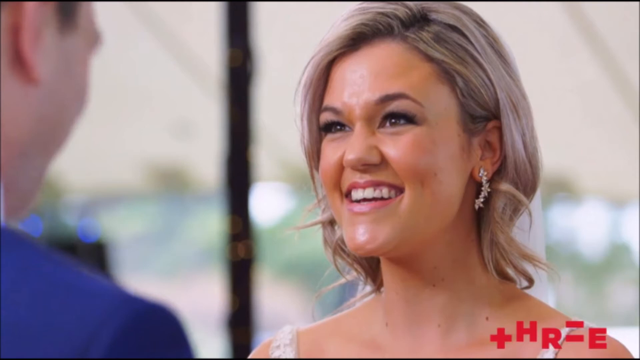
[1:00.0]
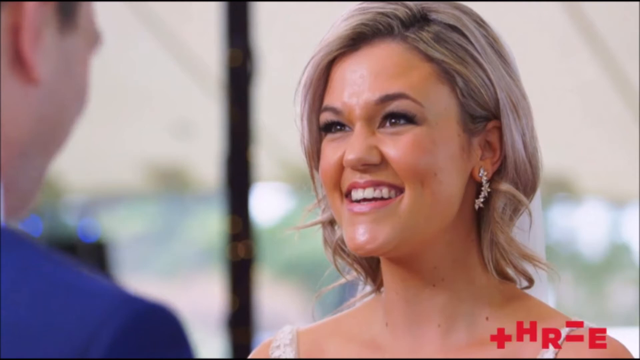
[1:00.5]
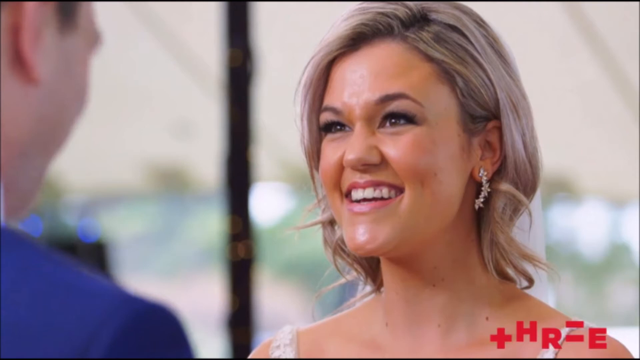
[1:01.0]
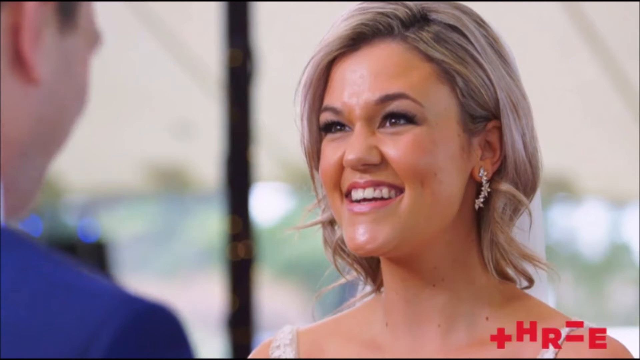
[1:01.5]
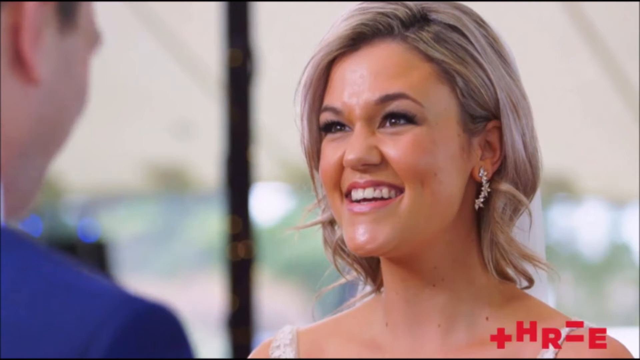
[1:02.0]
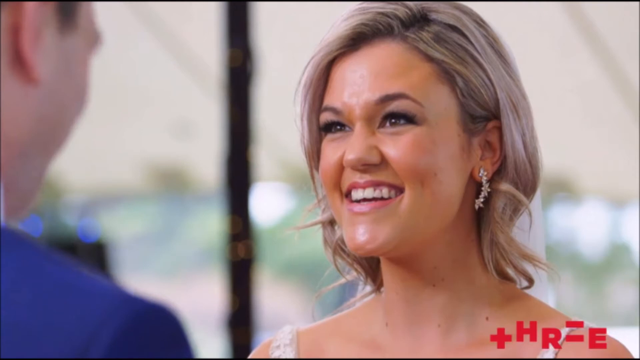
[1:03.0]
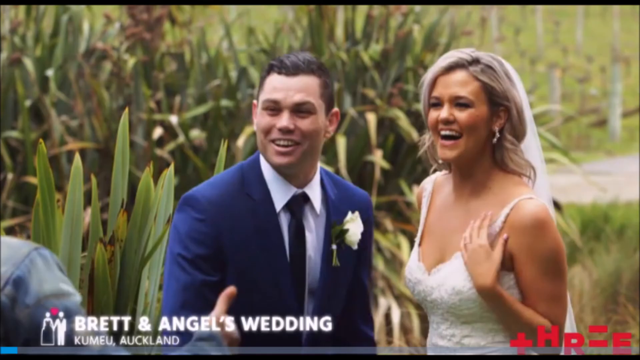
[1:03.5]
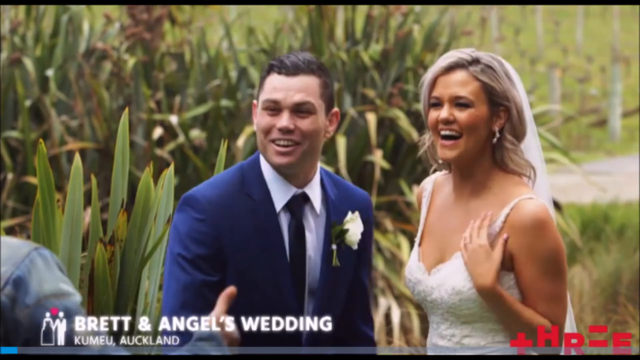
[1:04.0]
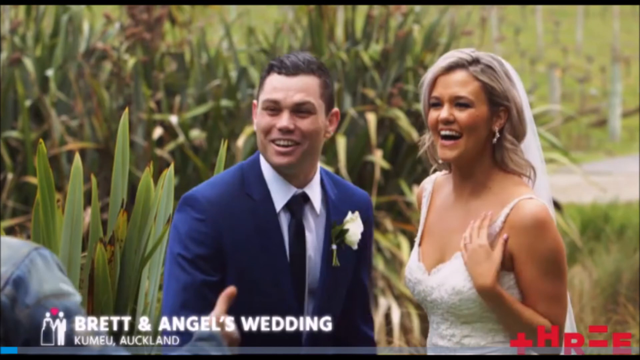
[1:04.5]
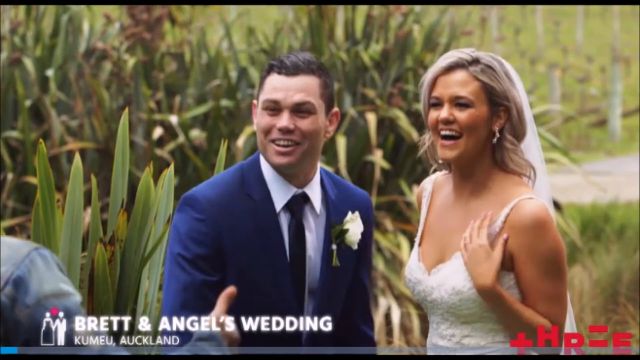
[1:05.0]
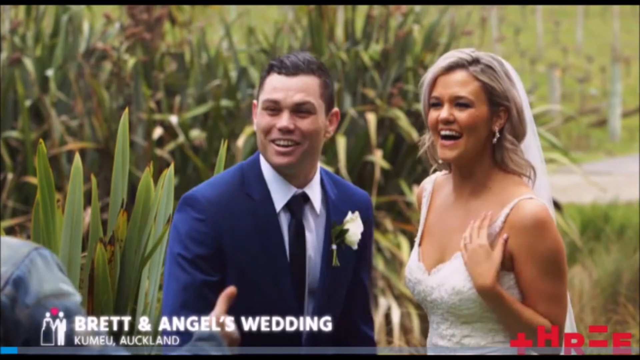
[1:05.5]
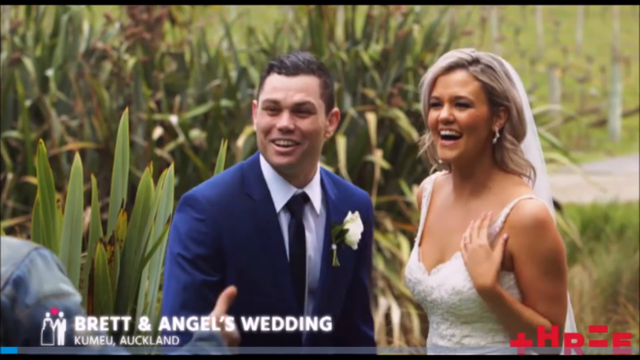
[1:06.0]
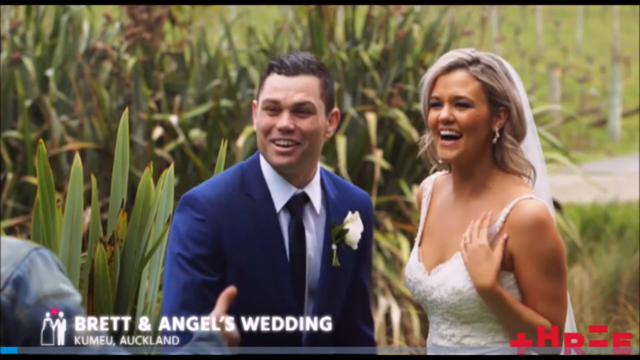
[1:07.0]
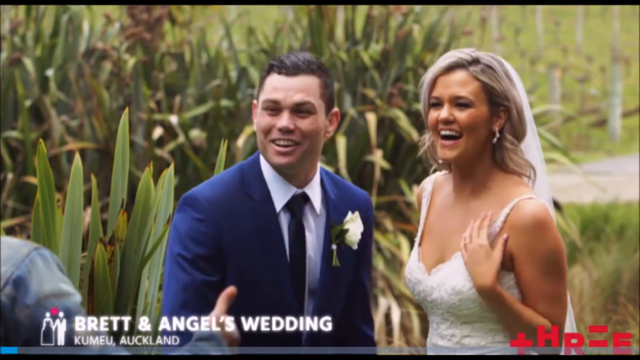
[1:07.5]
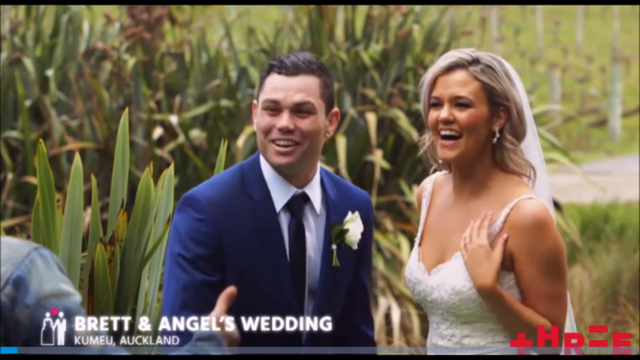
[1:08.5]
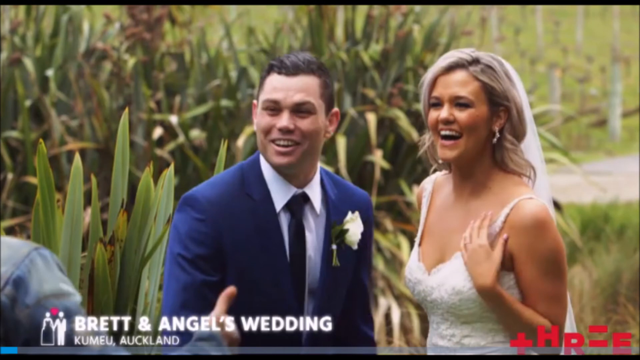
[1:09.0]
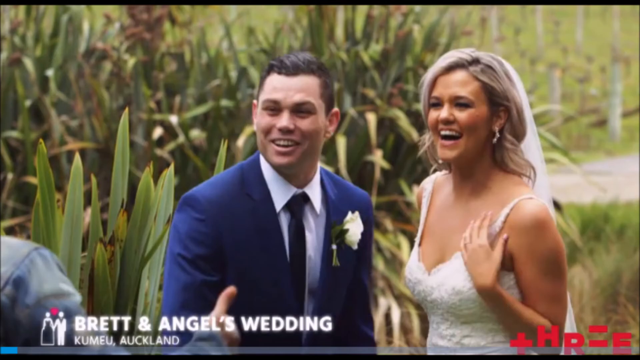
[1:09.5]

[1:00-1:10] Several pictures appear. In one, a woman smiles at a man. Glimpses of white clothing show on her, her hair is silver, and a piercing is visible in her left ear. In front of her is a man in a blue suit. Next comes a picture from Brett and Angel's wedding, with the bride on the right and the husband on the left. The groom wears a blue suit with a black tie, and Angel wears a white wedding dress. They are in a garden, with plants behind them.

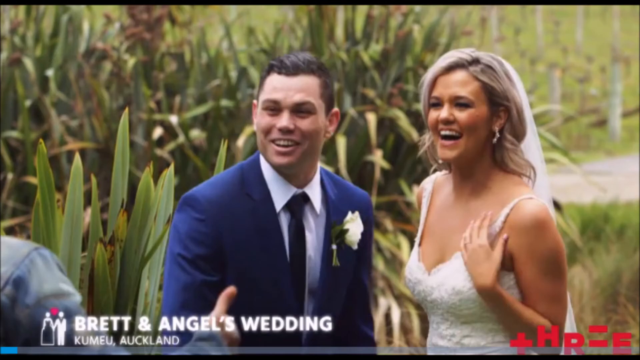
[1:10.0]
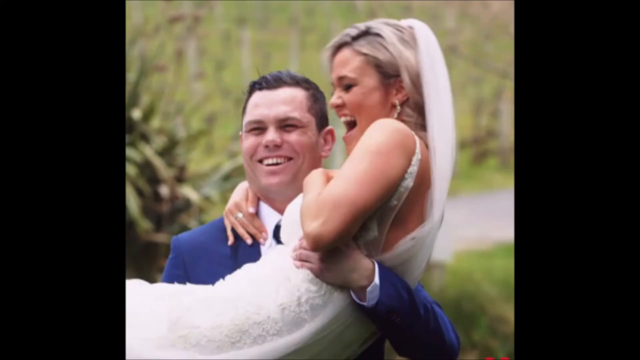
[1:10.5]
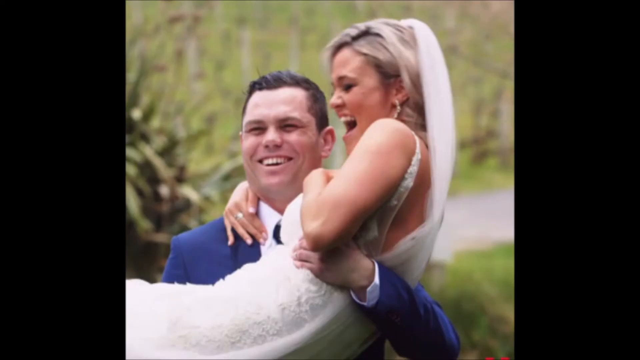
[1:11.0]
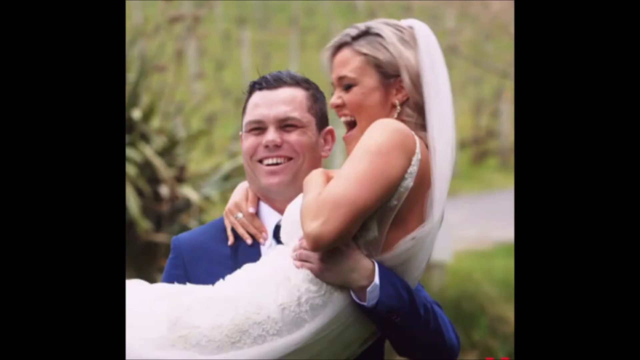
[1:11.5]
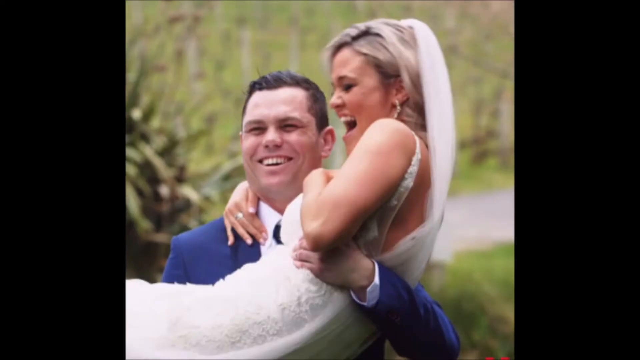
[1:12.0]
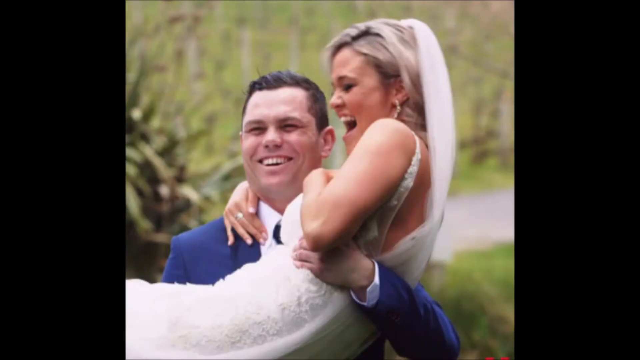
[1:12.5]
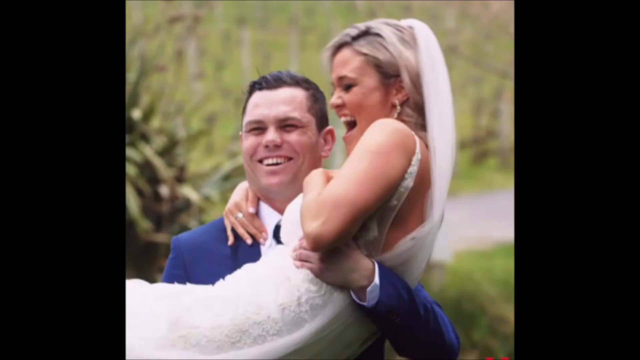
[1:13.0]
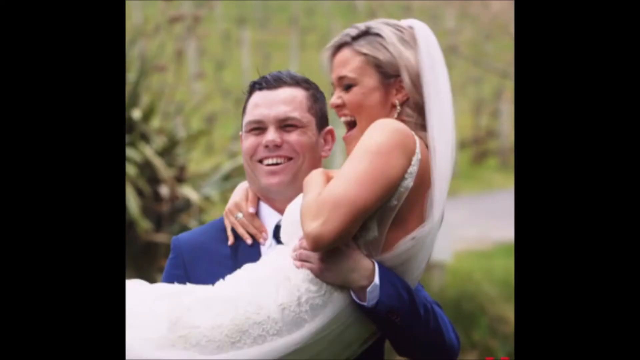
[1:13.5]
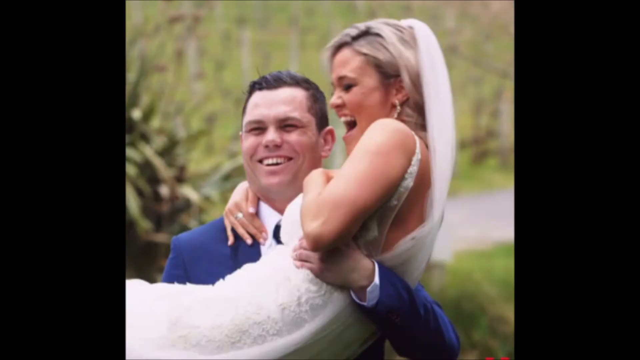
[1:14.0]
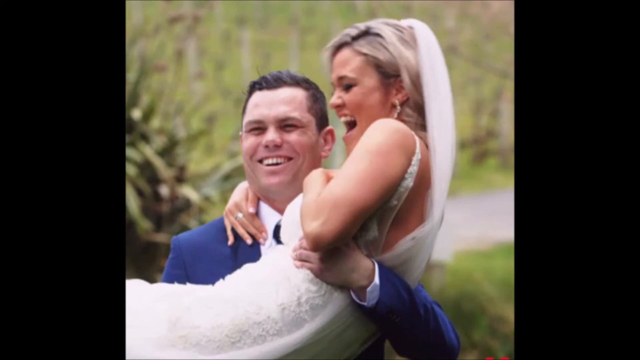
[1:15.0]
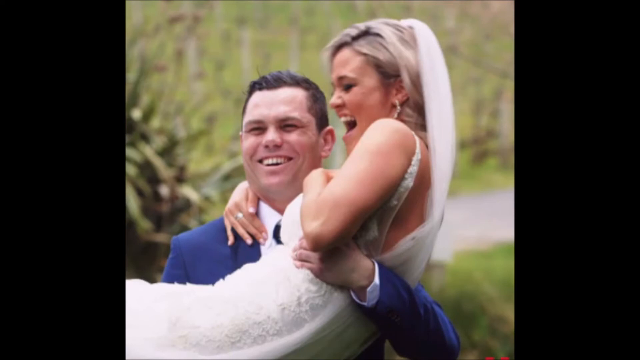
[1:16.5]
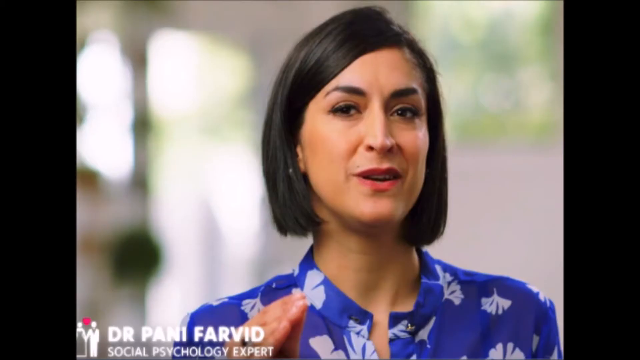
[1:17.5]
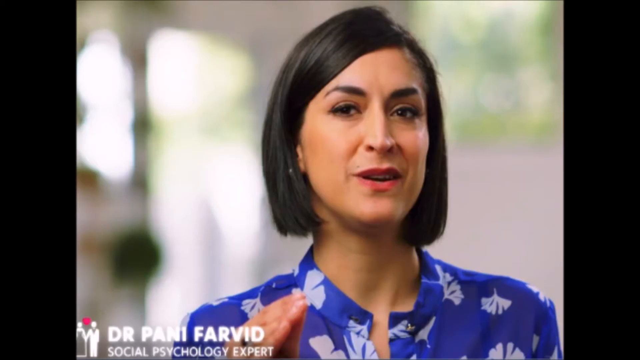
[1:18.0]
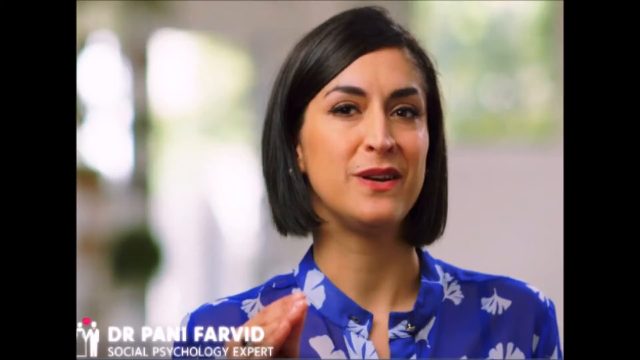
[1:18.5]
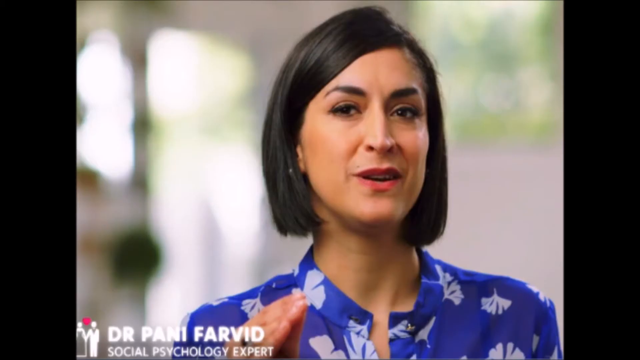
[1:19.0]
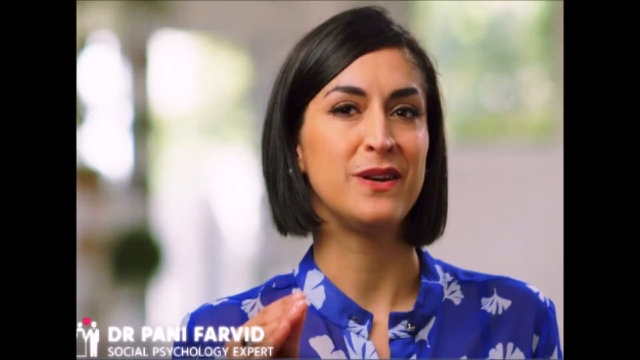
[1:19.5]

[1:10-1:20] A picture from Brett and Angel's wedding shows Brett on the left and Angel on the right. Angel wears a white dress, and the man on the left wears a blue suit. There are plants behind them. Brett holds Angel by the hands, and he has strong arms. Next comes a glimpse of a woman labeled "Dr. Pani Farid". She has black hair and wears a blue shirt, with both her left and right arms up, and seems to be about to speak.